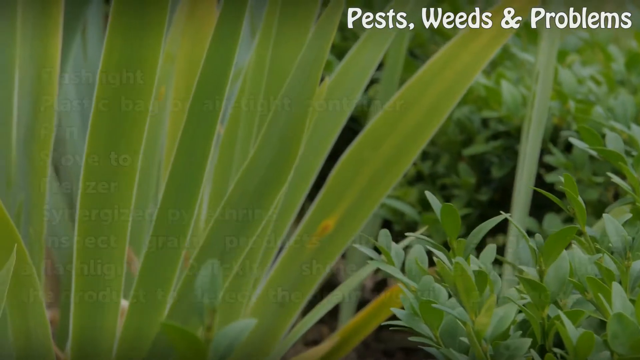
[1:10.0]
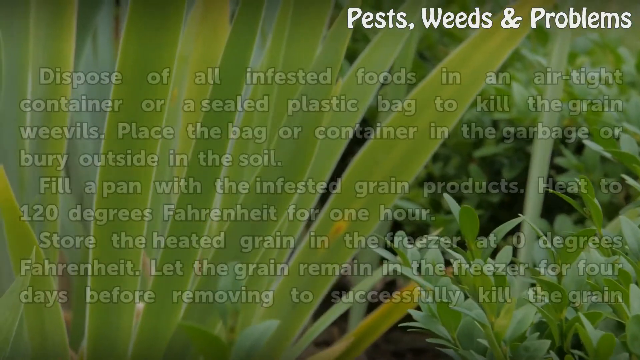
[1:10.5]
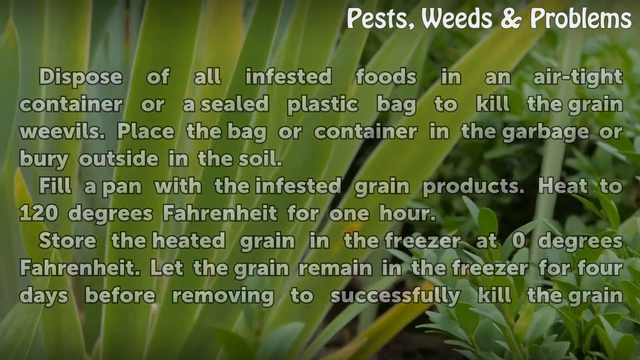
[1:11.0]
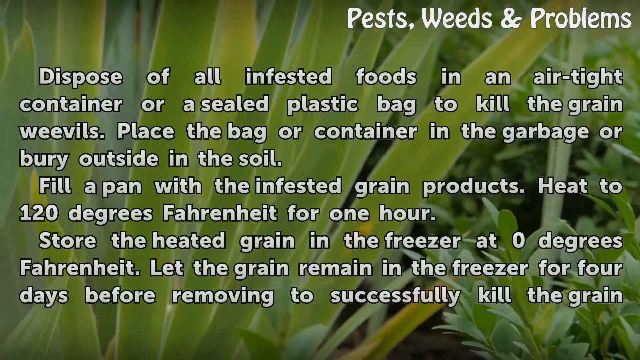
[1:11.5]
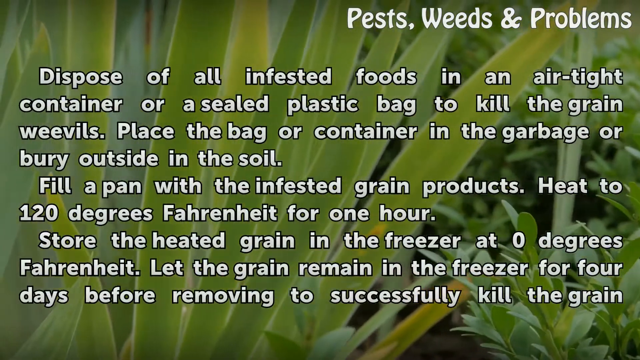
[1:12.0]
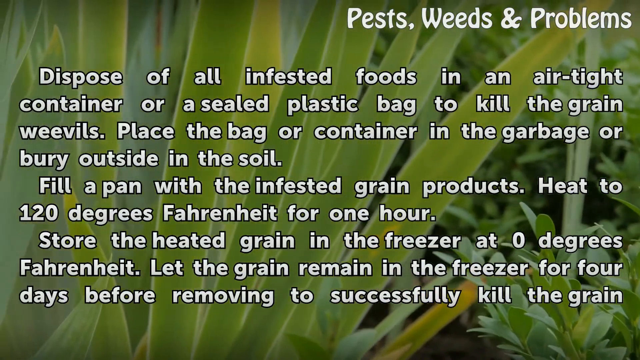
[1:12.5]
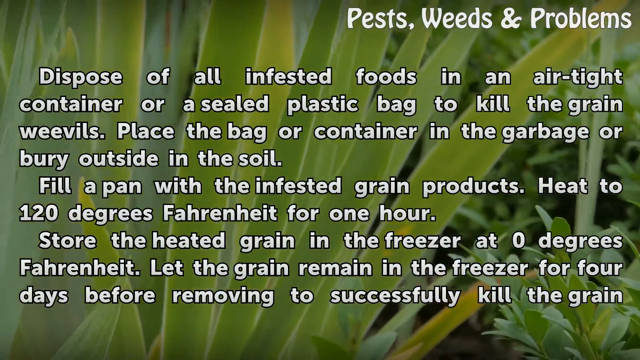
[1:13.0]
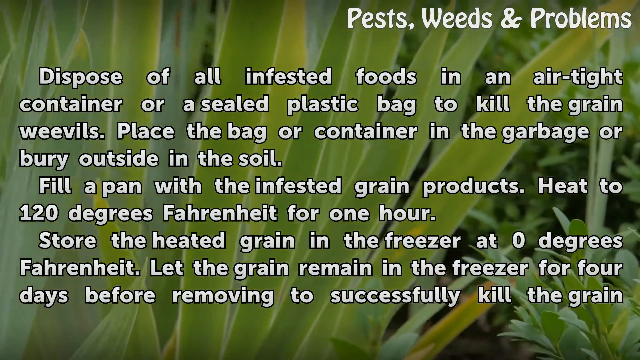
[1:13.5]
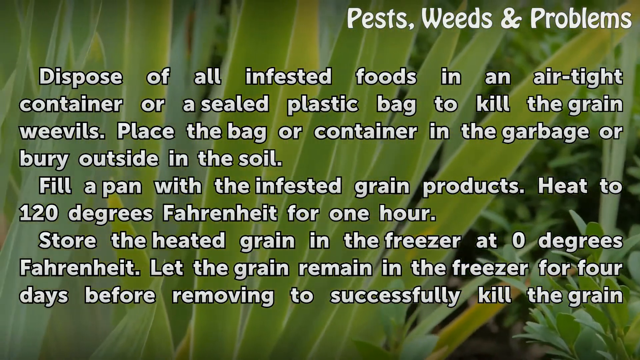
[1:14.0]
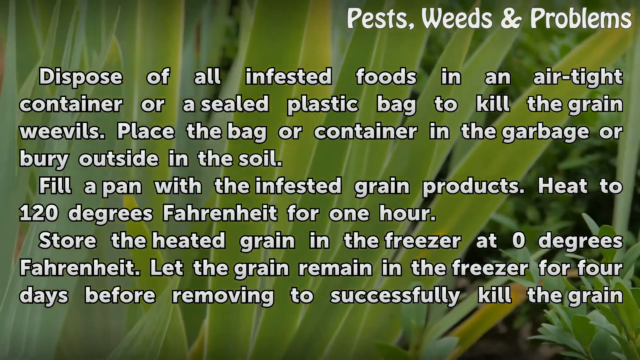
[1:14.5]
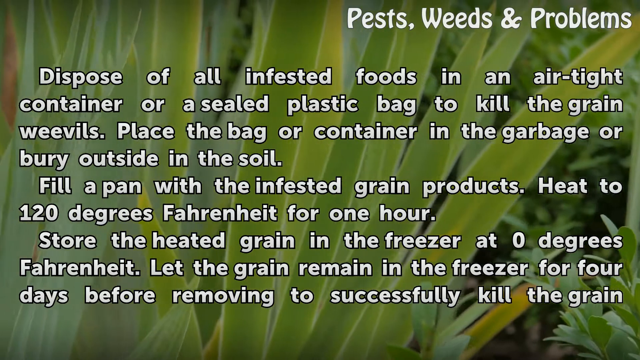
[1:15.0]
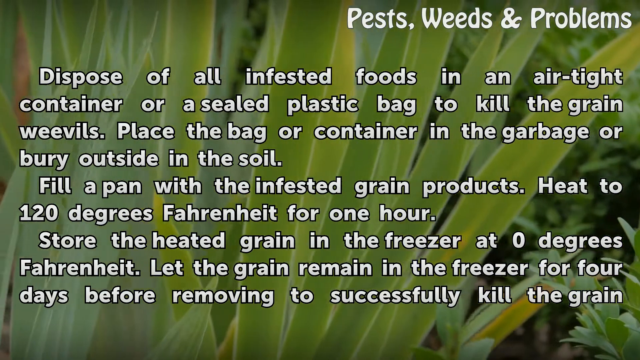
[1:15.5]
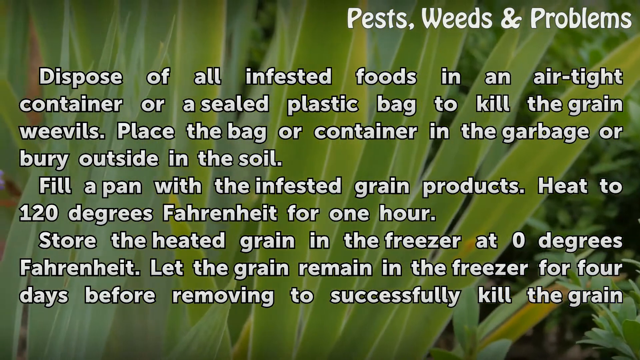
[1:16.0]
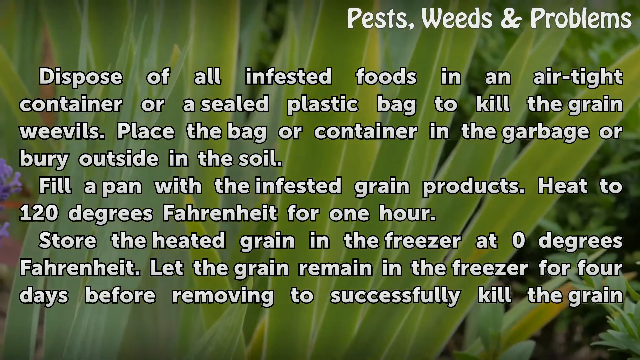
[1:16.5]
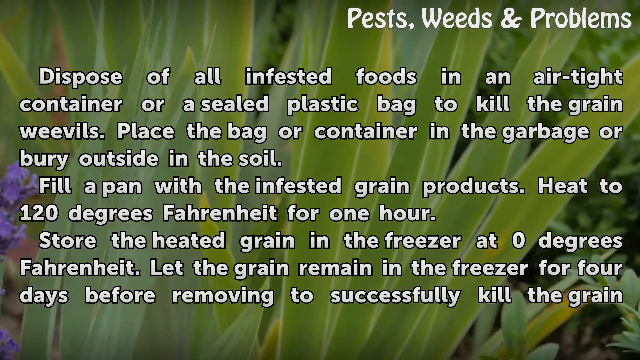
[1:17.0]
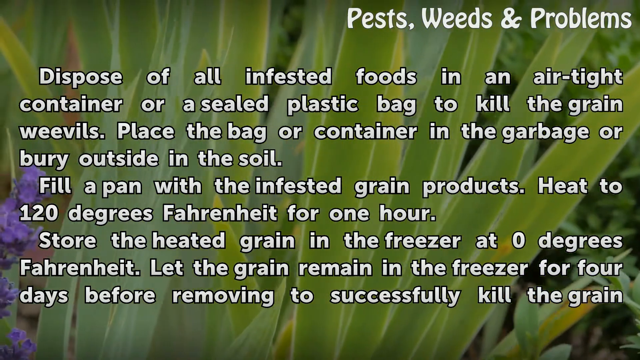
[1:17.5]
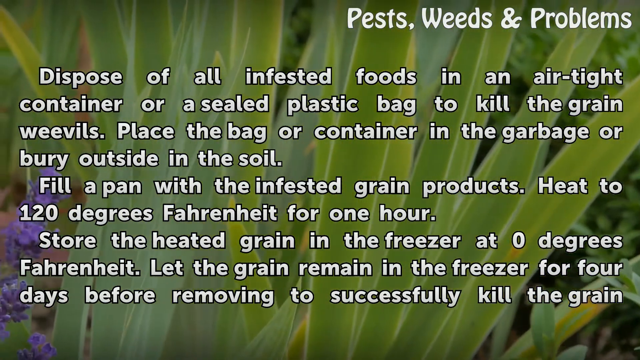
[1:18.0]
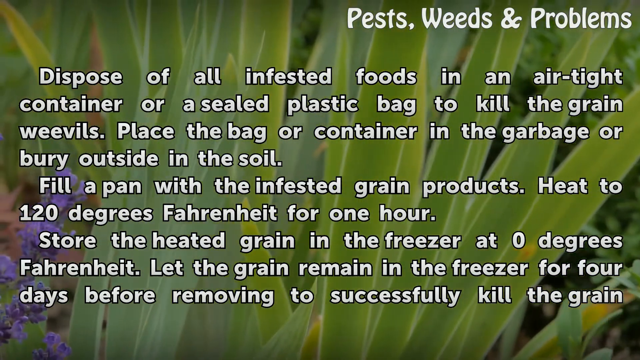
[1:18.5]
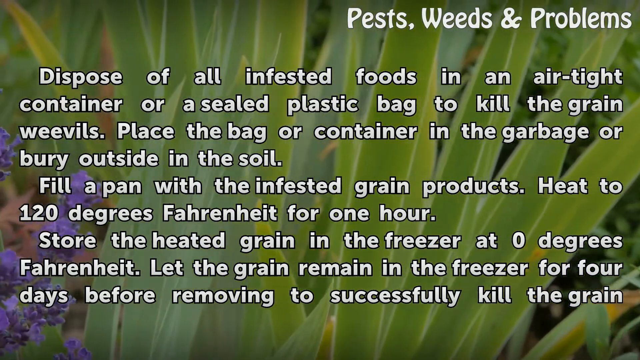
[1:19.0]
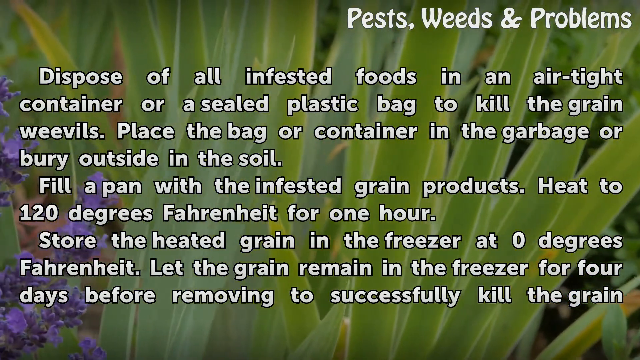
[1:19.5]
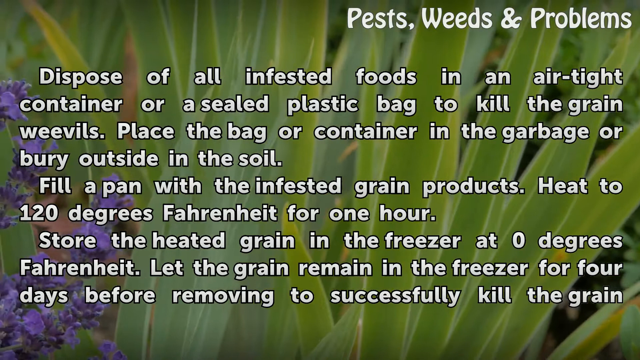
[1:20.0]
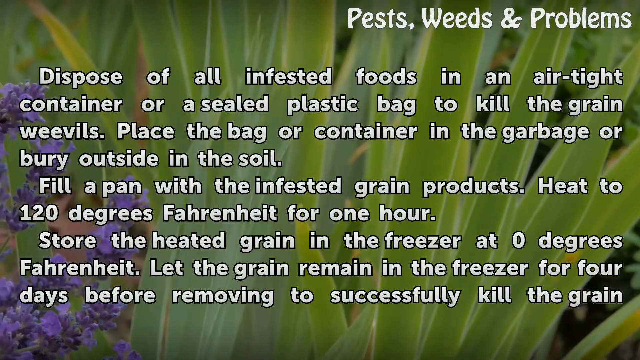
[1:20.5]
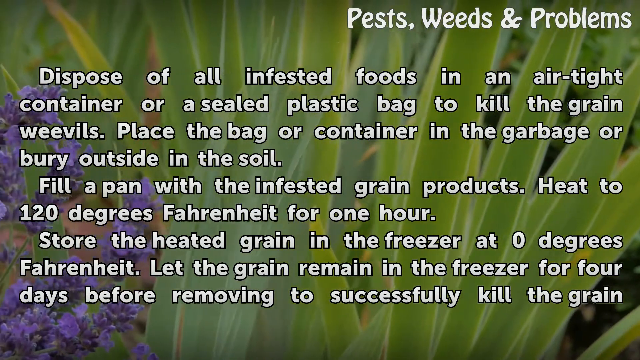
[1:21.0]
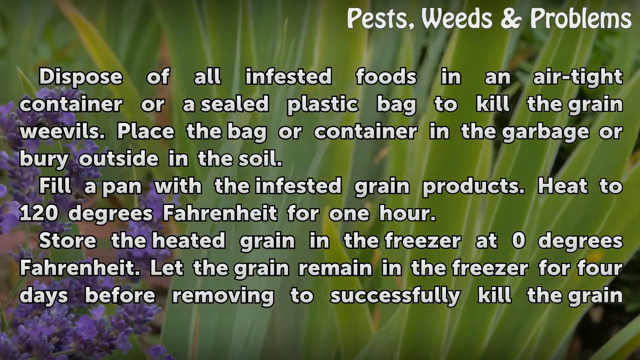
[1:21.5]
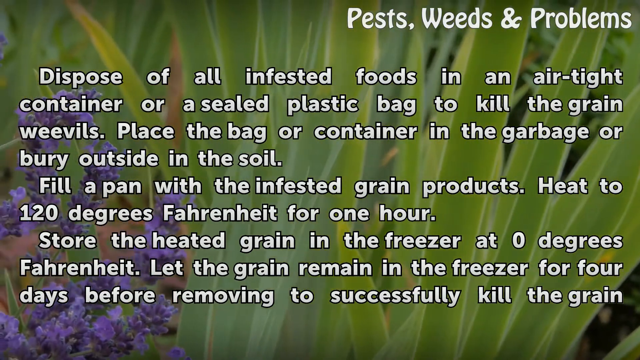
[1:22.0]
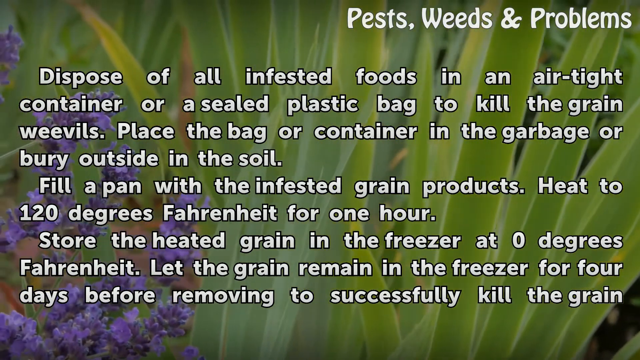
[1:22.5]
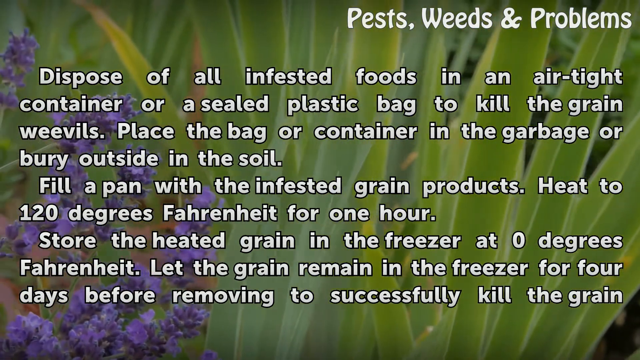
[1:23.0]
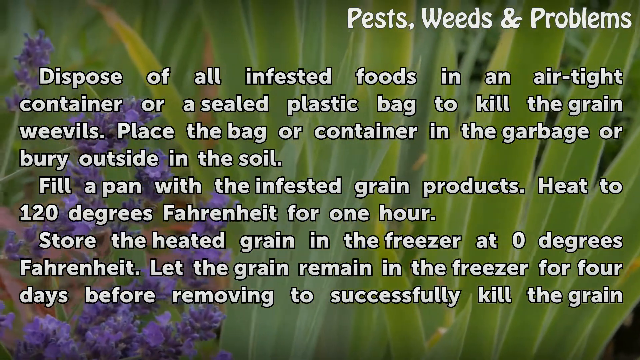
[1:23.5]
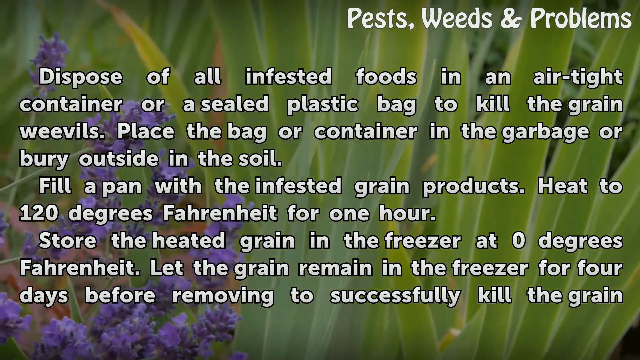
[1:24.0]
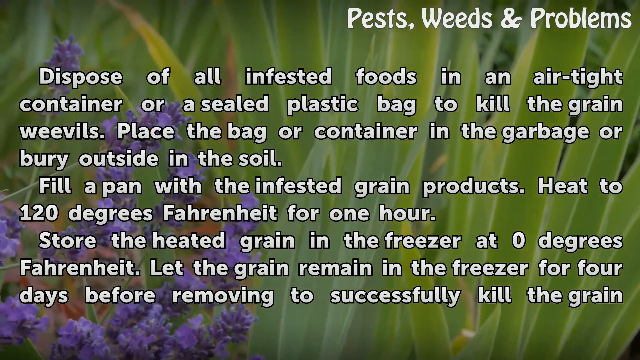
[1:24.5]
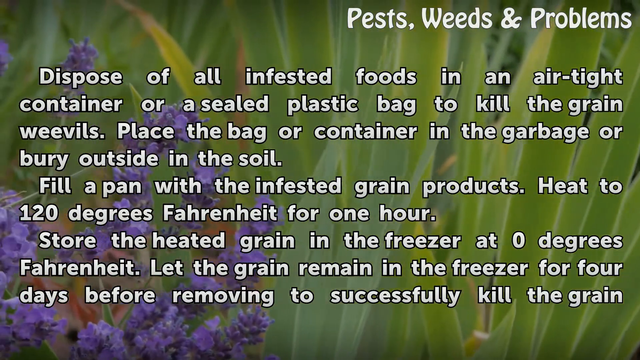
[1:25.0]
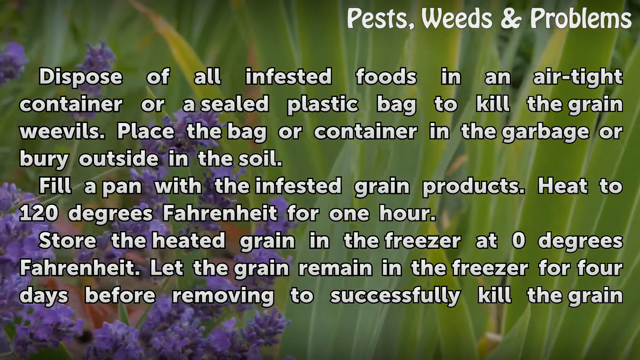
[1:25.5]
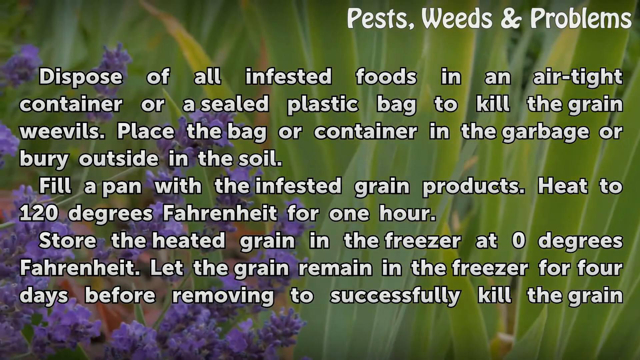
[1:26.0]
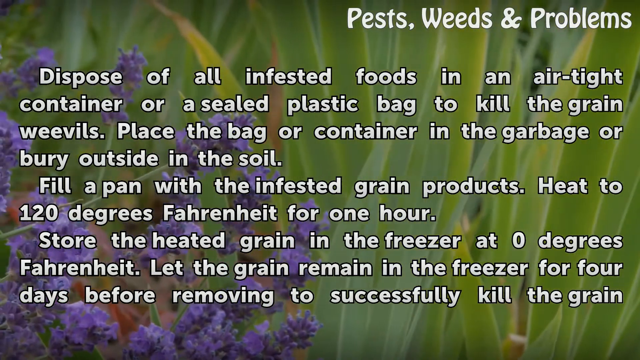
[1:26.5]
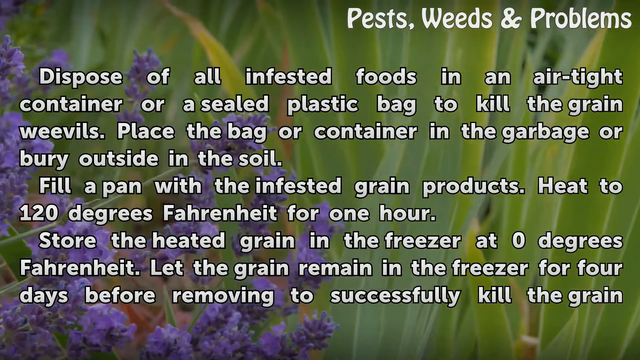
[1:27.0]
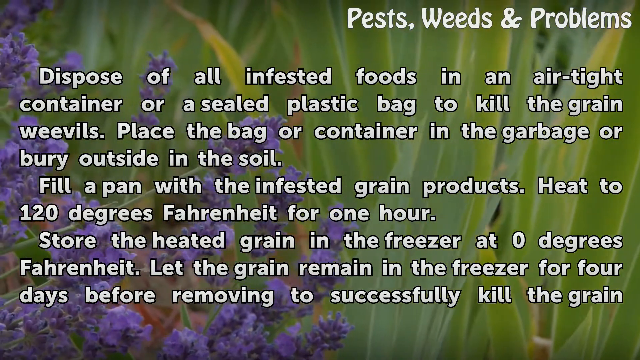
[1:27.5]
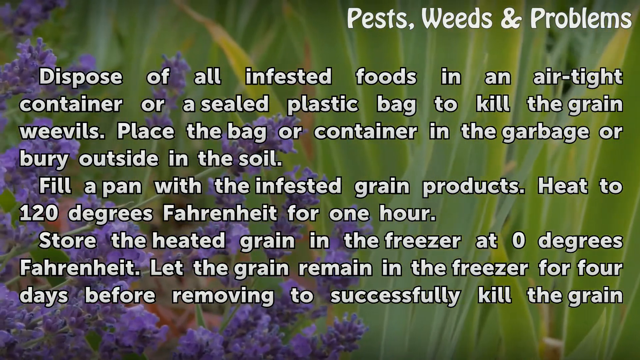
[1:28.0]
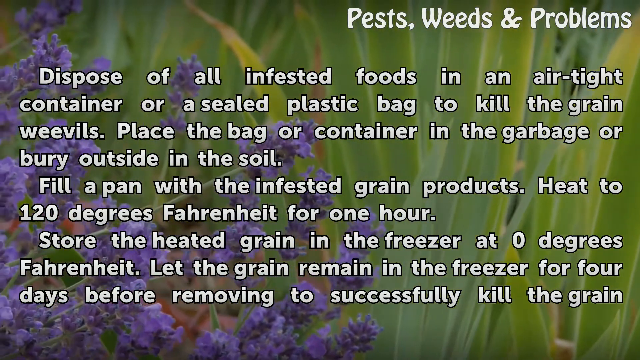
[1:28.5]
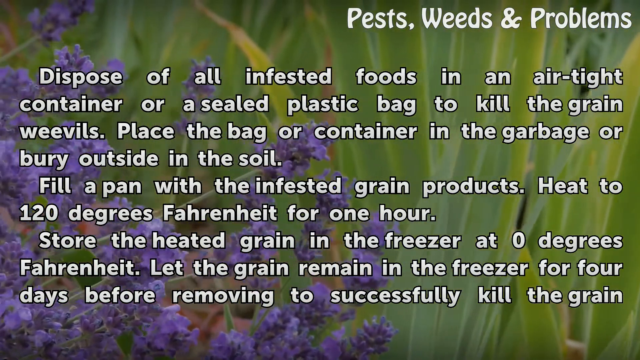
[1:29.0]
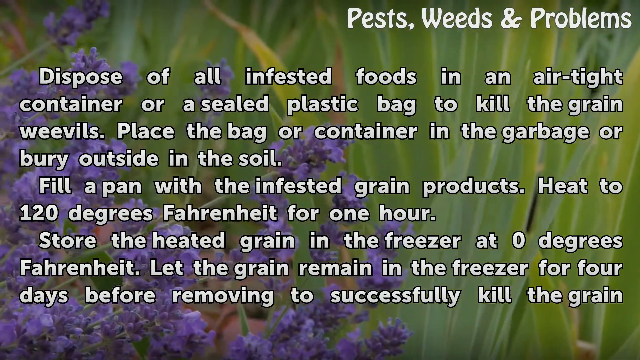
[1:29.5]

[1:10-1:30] A close-up of leaves, blades of grass and some small leaves on a plant scrolls by in the background. In the foreground, a message pops up: "dispose of all infested foods in an airtight container or sealed plastic bag to kill the grain weevils. Place the bag or container in the garbage or bury outside in the soil. Fill a pan with the infested grain products and heat to 120 degrees Fahrenheit for one hour. Store the heated grain in the freezer at zero degrees Fahrenheit. Let the grain remain in the freezer for four days before removing". Long blades of grass grow in the background while the message is shown. At the very end, a large cluster of purple flowers appears, looking like lavender or something similar.